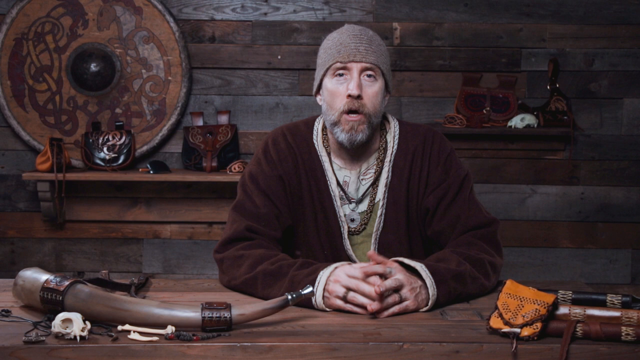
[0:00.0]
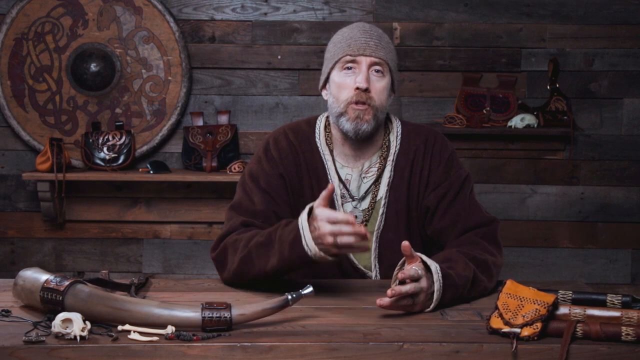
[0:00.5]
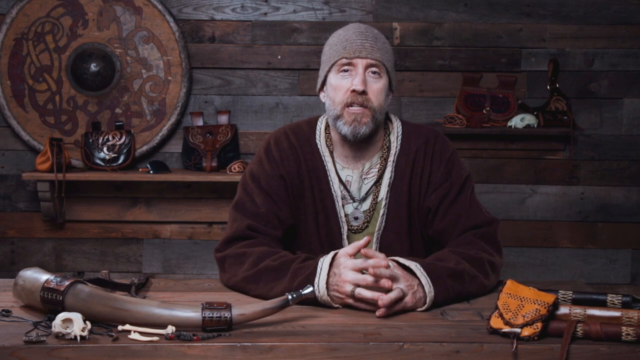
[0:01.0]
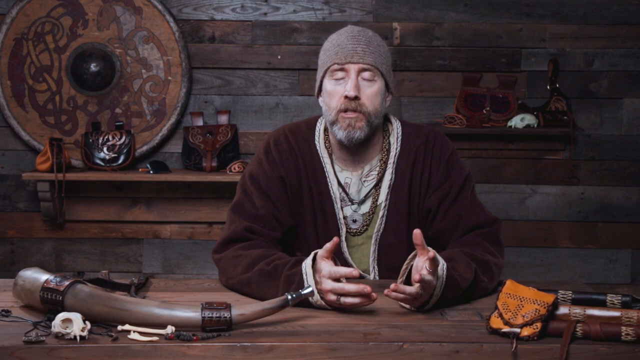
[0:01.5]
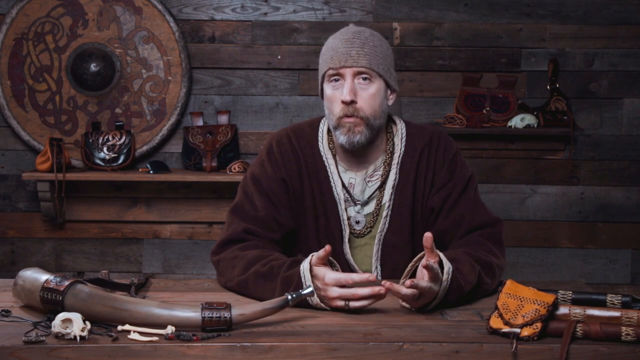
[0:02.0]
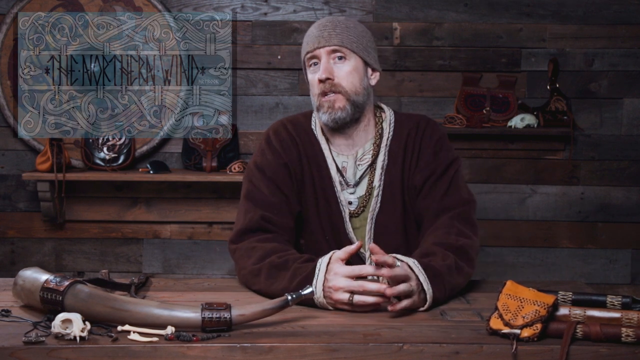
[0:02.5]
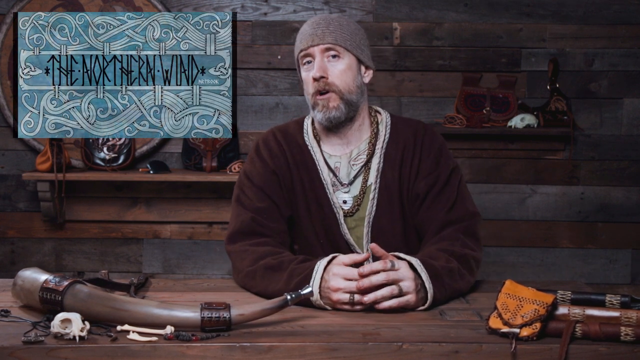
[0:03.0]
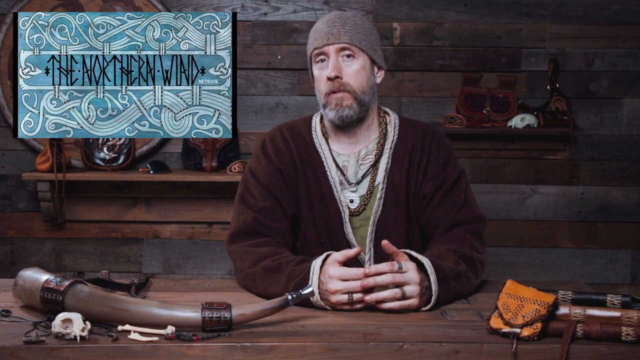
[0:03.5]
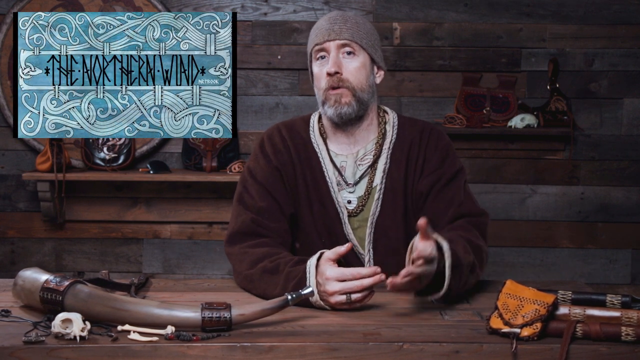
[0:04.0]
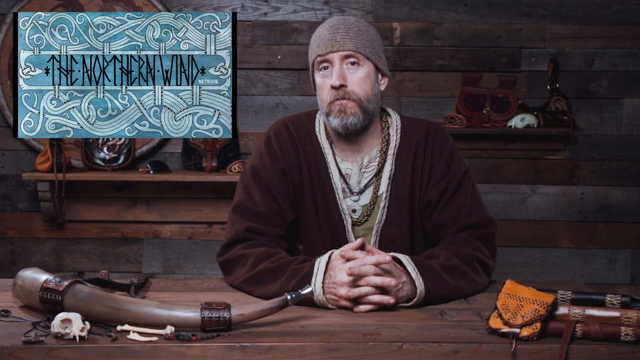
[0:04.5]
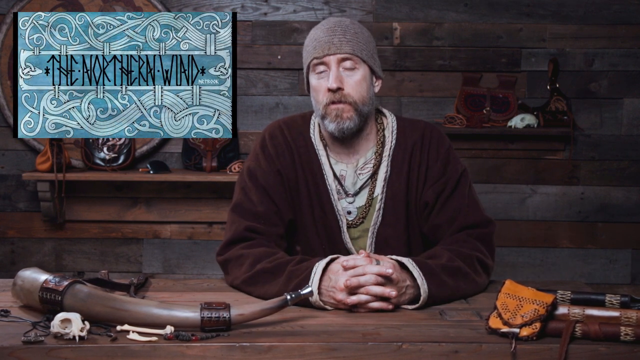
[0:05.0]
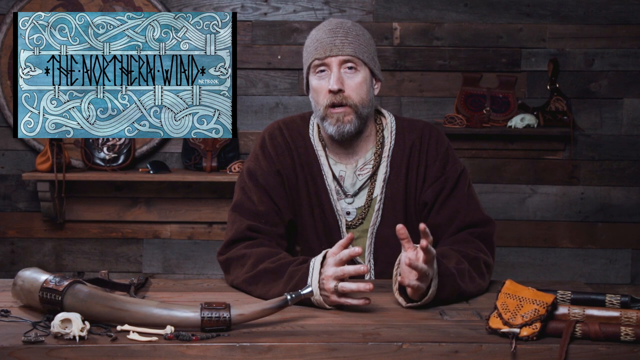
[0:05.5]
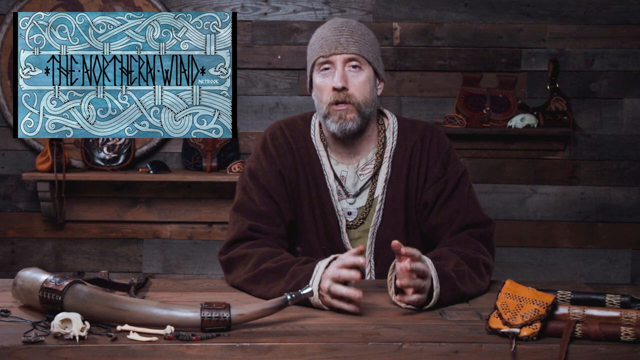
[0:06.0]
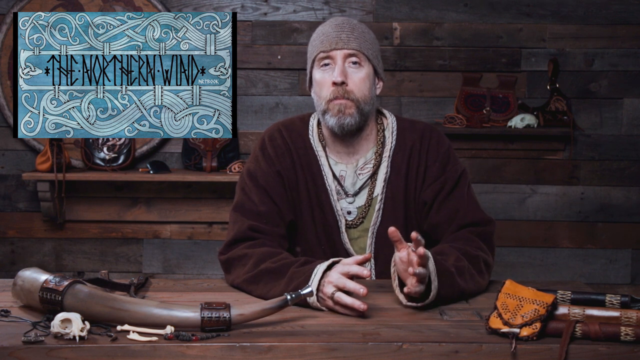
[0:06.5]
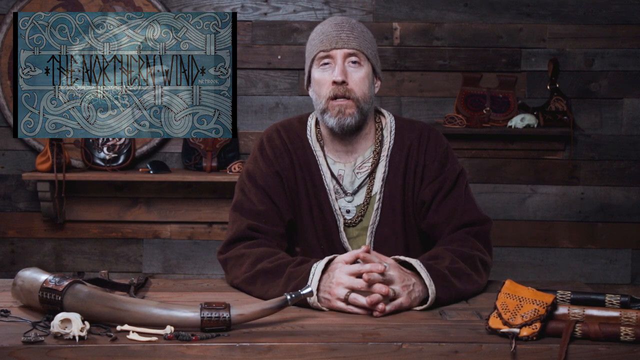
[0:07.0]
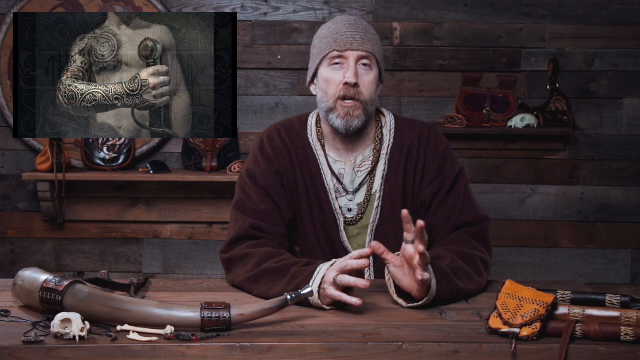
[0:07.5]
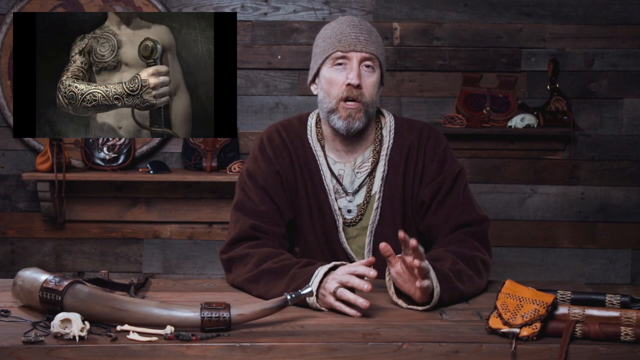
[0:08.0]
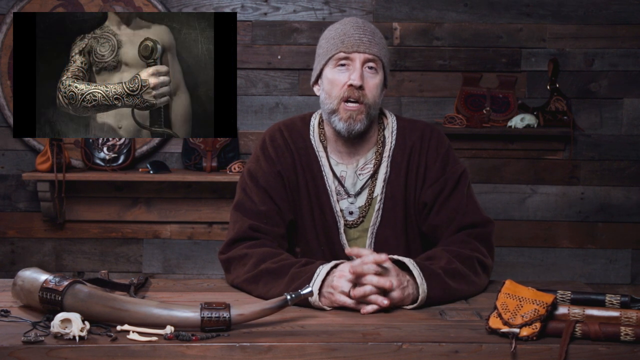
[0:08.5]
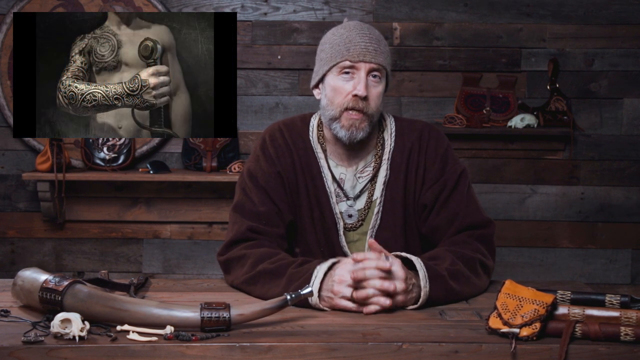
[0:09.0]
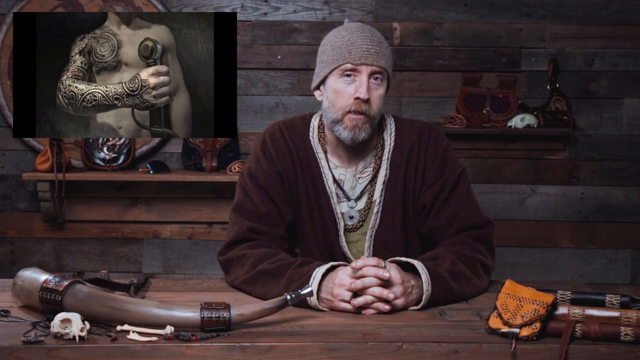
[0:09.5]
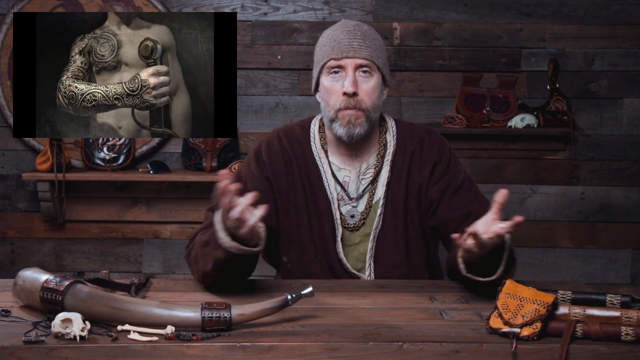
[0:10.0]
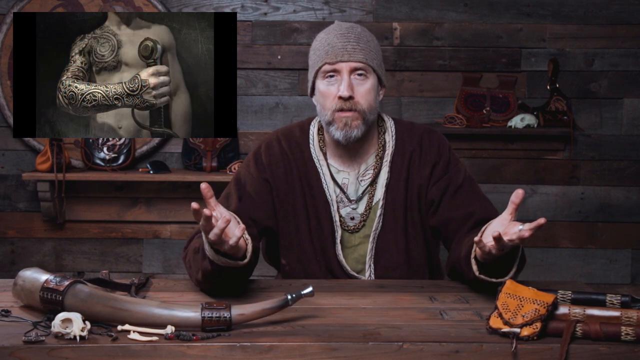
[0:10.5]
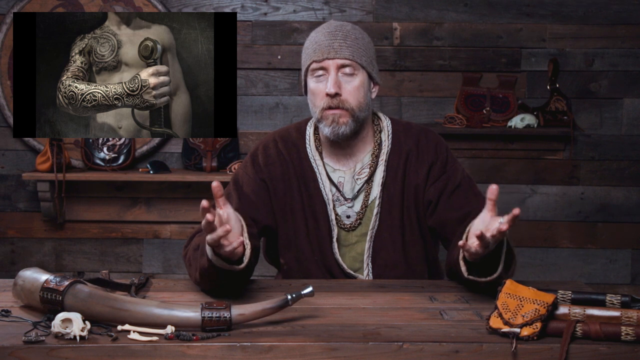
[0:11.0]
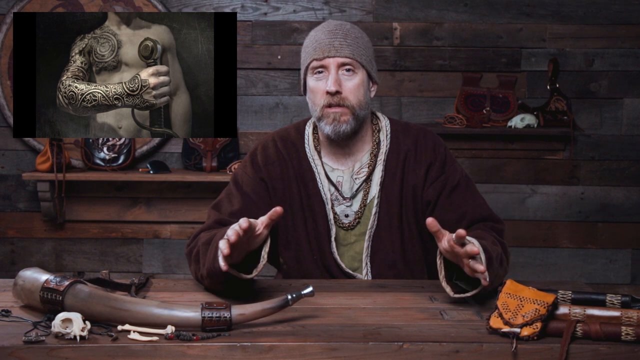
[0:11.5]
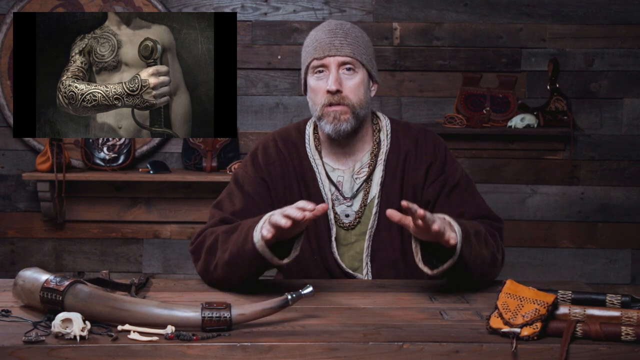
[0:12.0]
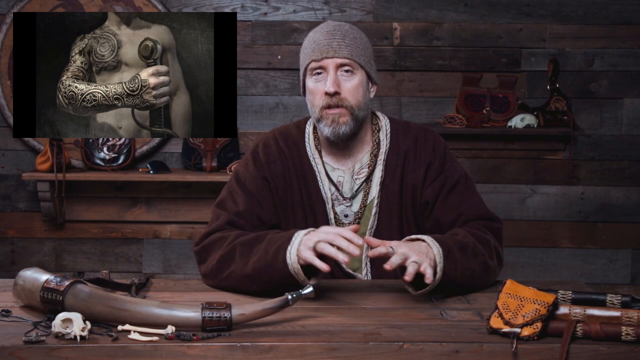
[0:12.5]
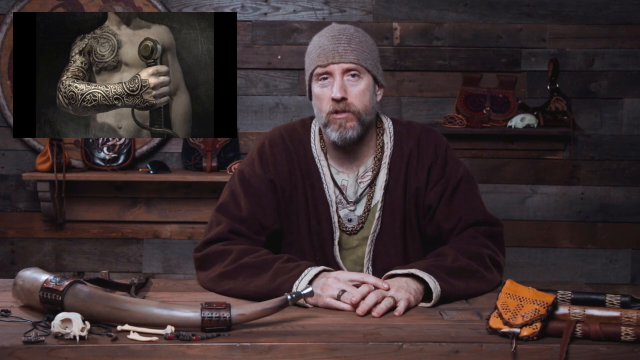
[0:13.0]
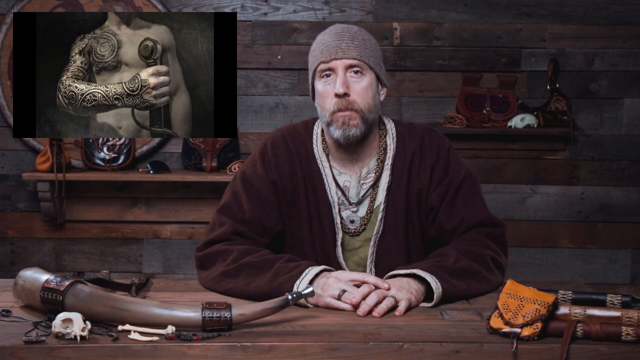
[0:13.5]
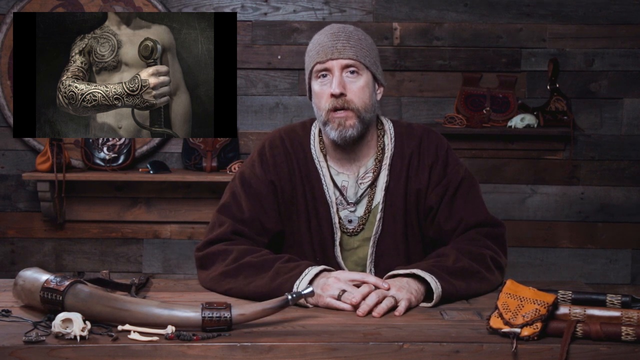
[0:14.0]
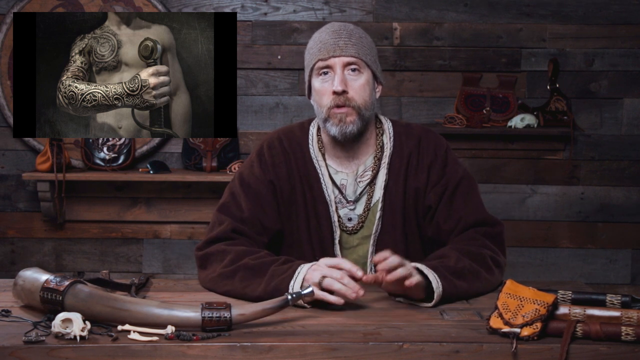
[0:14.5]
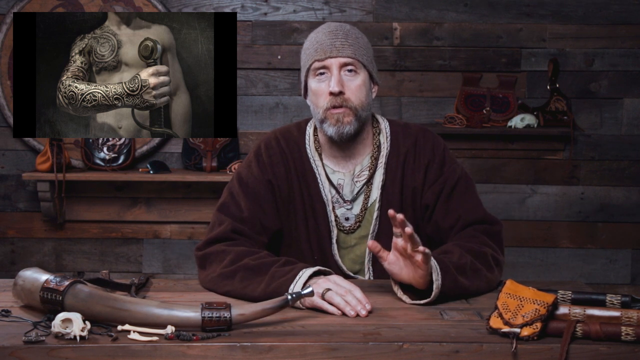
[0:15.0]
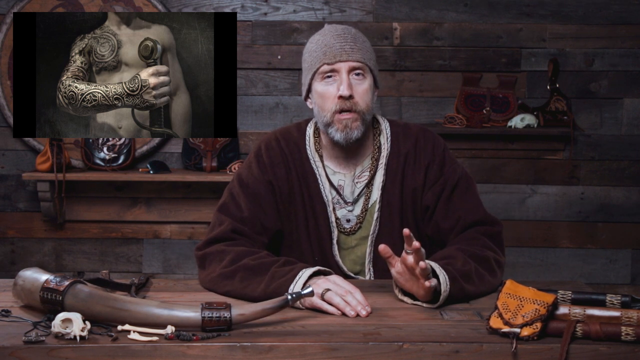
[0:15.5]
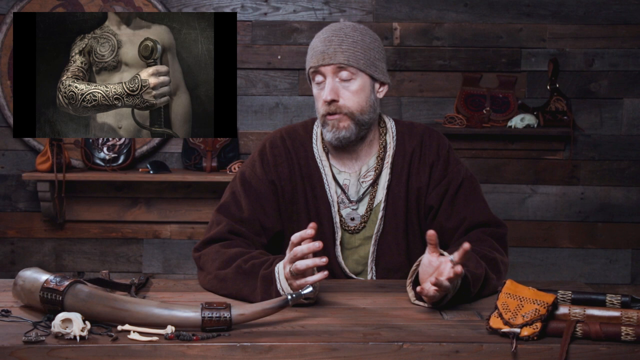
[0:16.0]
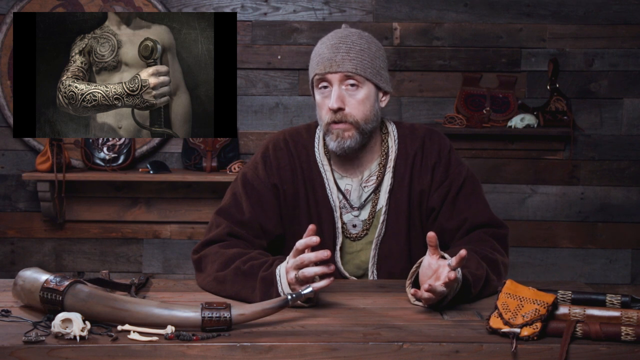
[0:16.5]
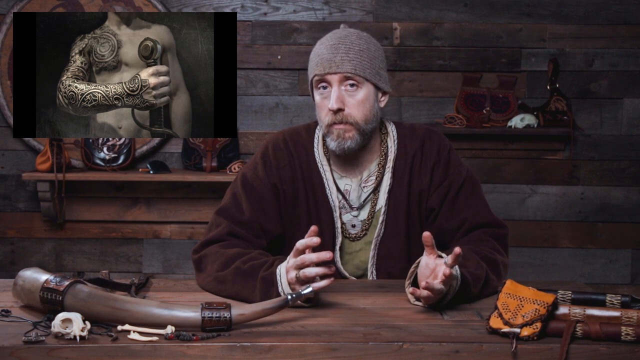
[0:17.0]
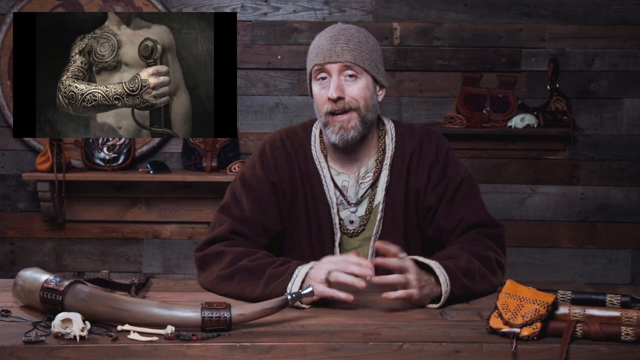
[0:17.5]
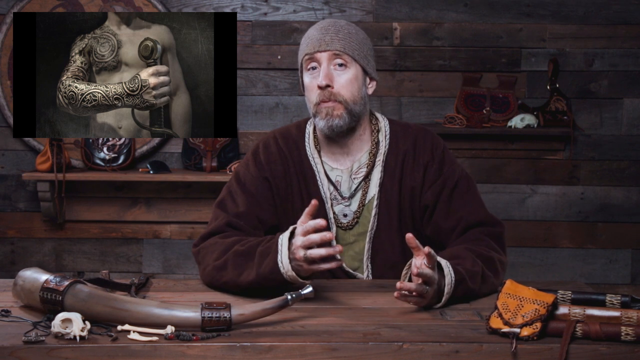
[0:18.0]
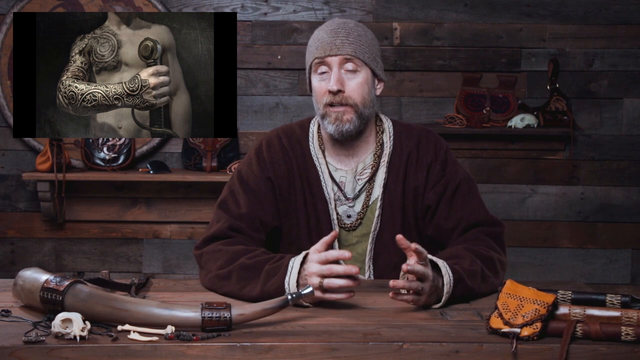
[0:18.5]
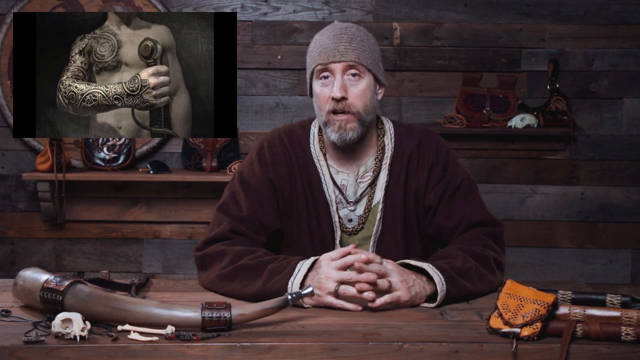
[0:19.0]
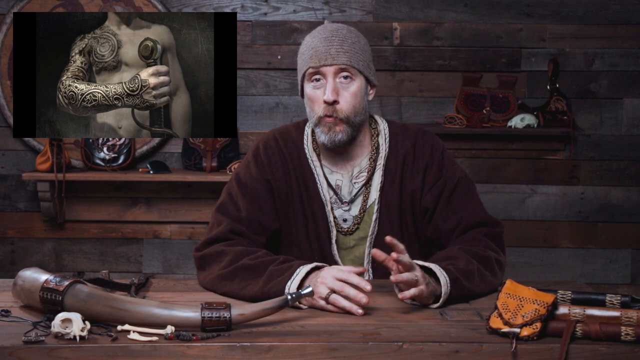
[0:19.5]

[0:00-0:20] A man is in a room with a wooden wall behind him, apparently made of planks of wood, and wooden shelves. He wears a beanie, elaborate necklaces and a robe that is sort of maroon. His beard is mostly grey, a little brown around the moustache. As he talks, images appear and cycle through the top left corner, with the text "the Northern Wind"; they look sort of like they may be Viking-based. One of the images changes to a drawing of someone with tattoos all over their right arm and shoulder, holding a sword in their right hand. The man talks to the camera, moving his hands up and down and apparently putting them back on the wooden desk in front of him. On the desk is a historical item that looks like some sort of horn. To the left of the screen, behind him, there are a couple of shelves with historical cultural items on them.